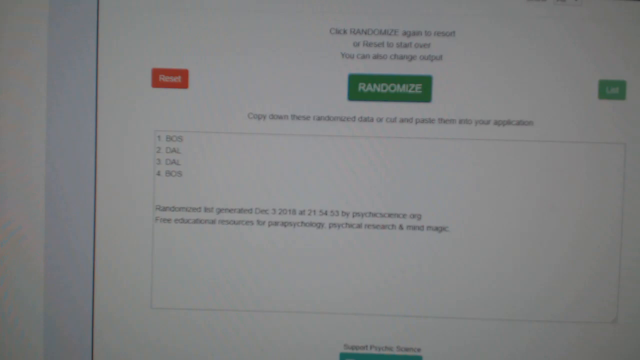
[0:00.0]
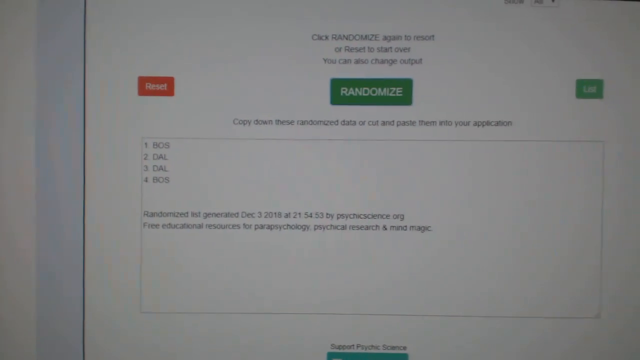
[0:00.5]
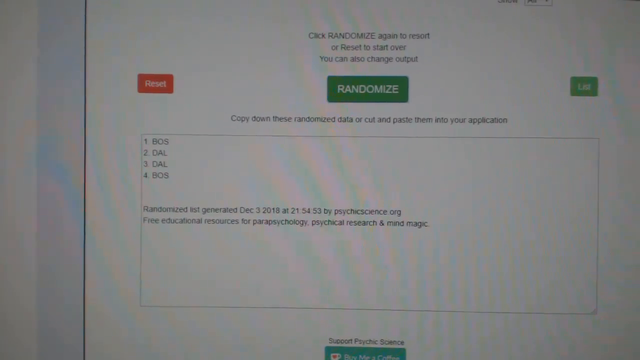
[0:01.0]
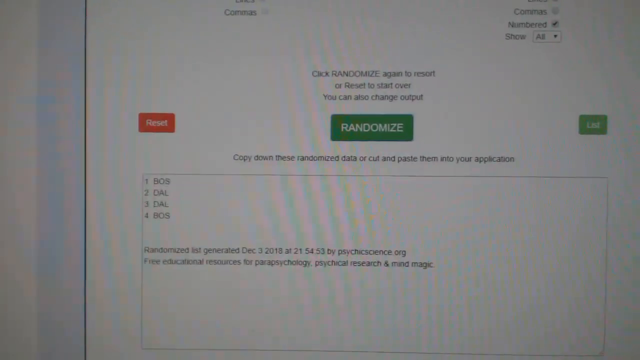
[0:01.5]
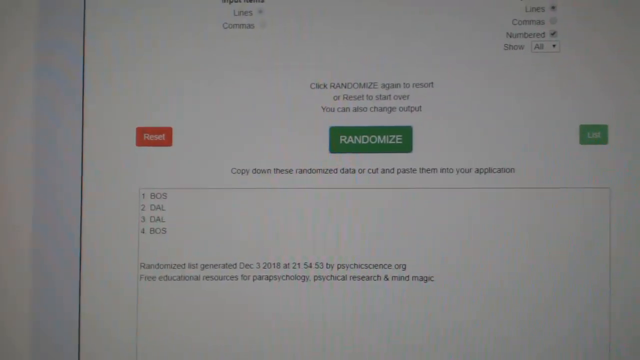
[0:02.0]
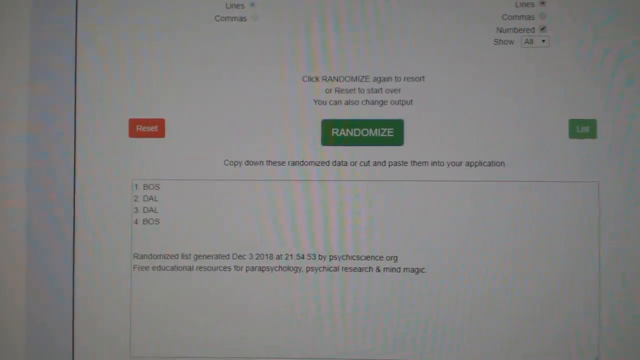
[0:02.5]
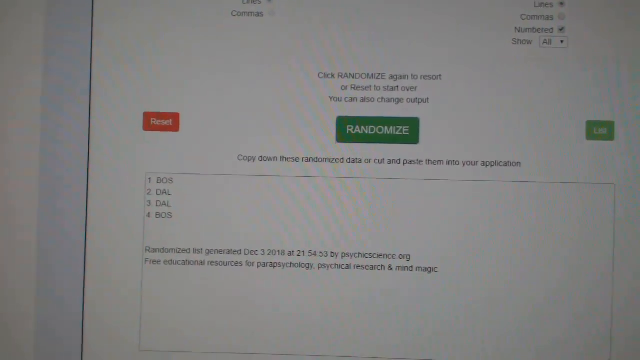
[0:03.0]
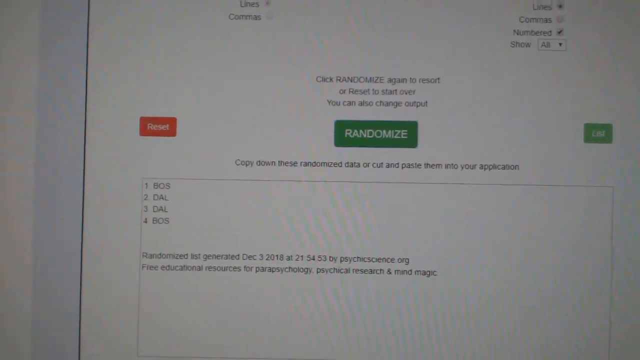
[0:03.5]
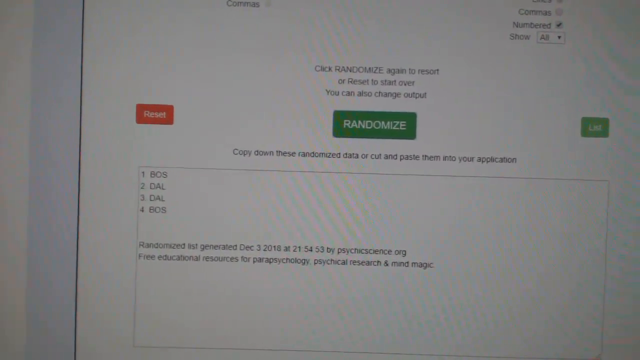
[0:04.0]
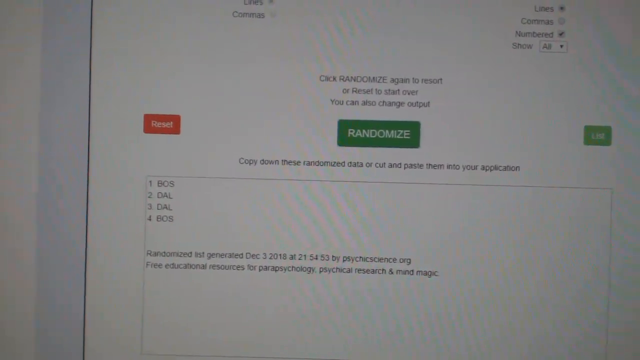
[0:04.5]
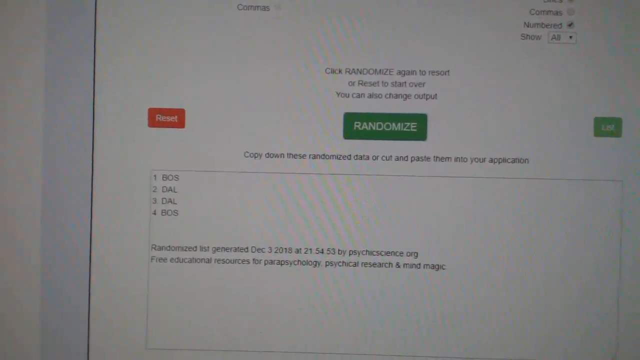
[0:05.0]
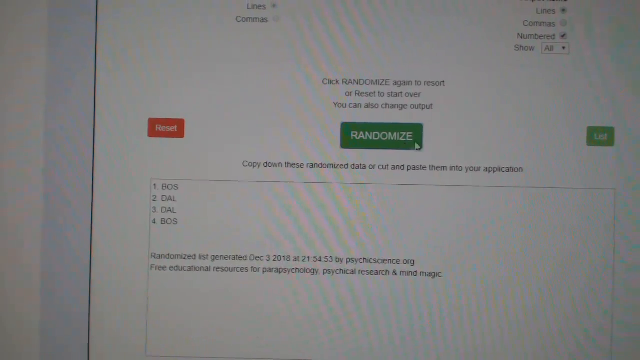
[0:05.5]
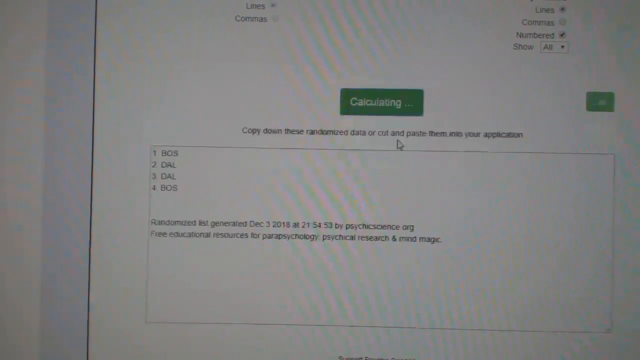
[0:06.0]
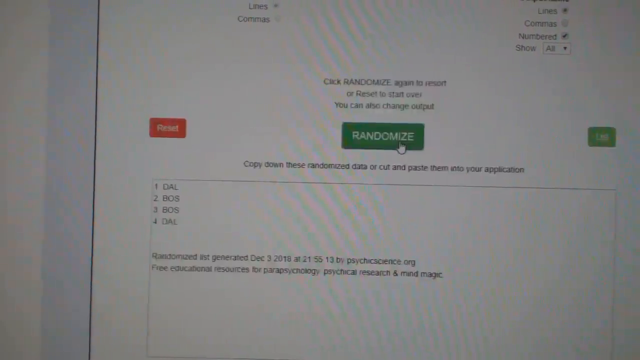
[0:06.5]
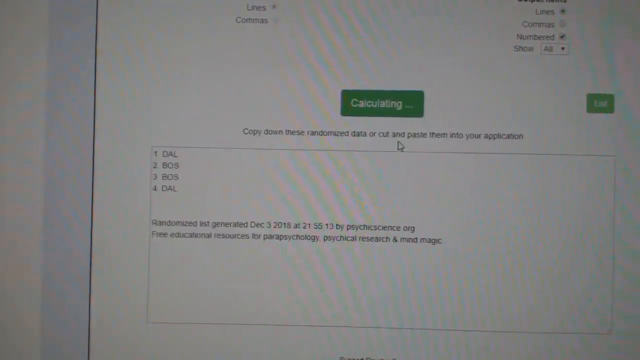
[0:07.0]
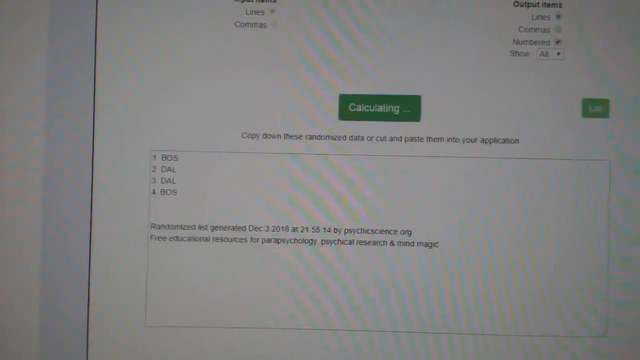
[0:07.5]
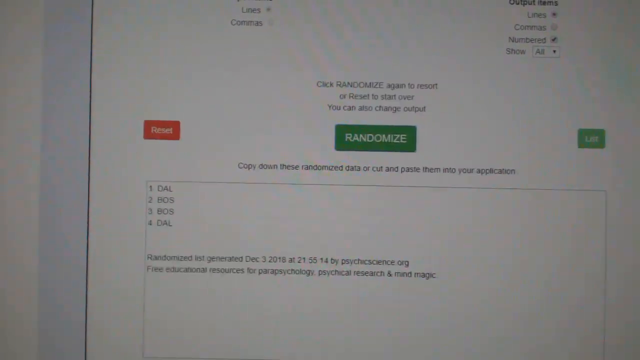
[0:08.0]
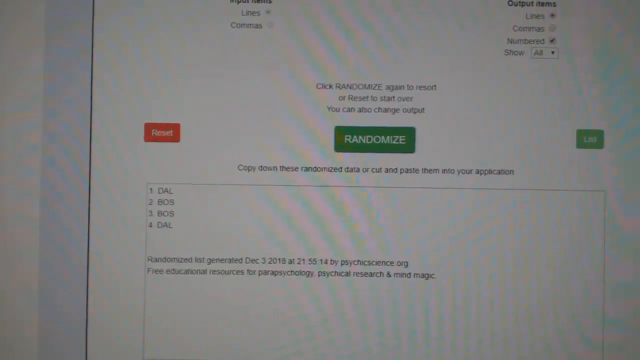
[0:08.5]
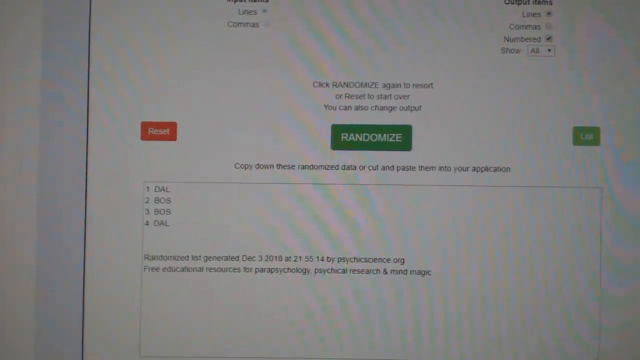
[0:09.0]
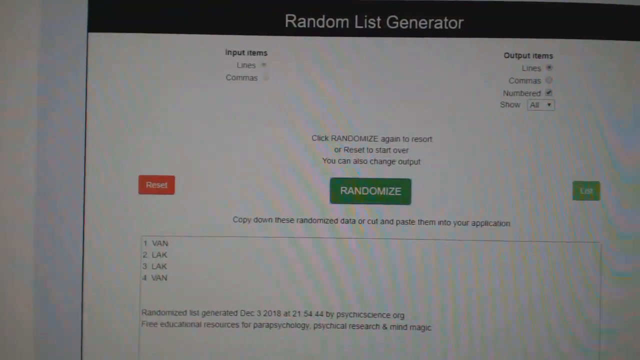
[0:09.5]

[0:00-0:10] A camera is pointed at a computer screen. In the center of the screen are three clickable buttons: the one on the left is red and says "Reset," and the one in the middle is green and says "Randomize." Below the tabs, black text reads "copy down these randomized data or cut and paste them into your application." Beneath that is a list of data reading "one, Boston, two, Dallas, three, Dallas, and four, Boston." The screen shakes as the person holding the camera moves it around. The person clicks the green "Randomize" tab, and the tab changes to "calculated."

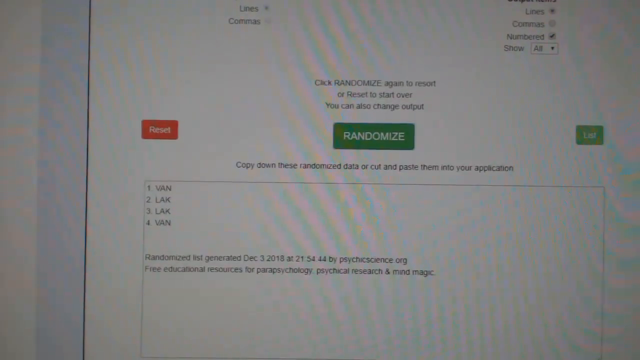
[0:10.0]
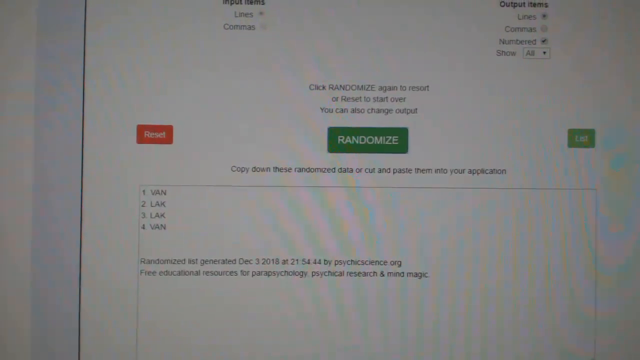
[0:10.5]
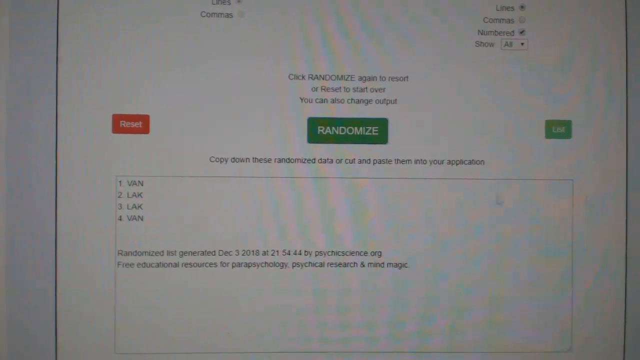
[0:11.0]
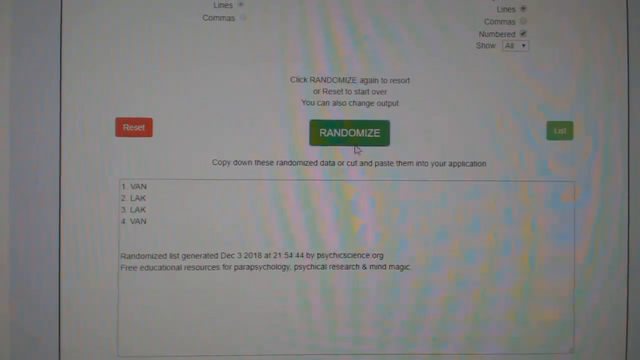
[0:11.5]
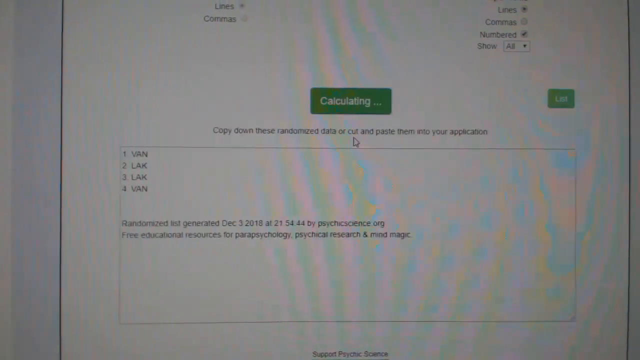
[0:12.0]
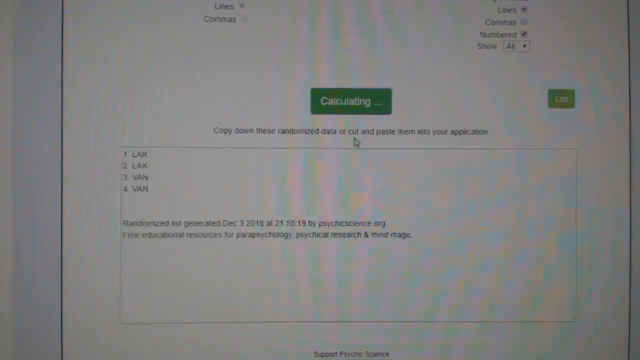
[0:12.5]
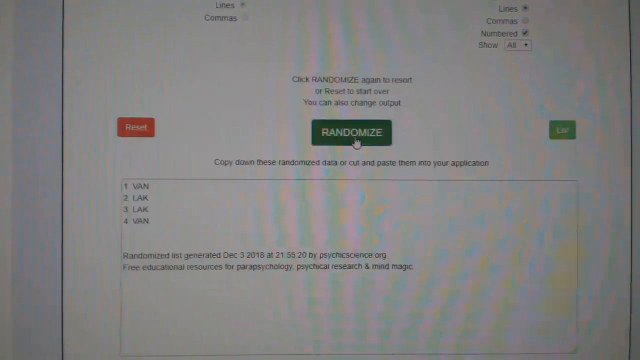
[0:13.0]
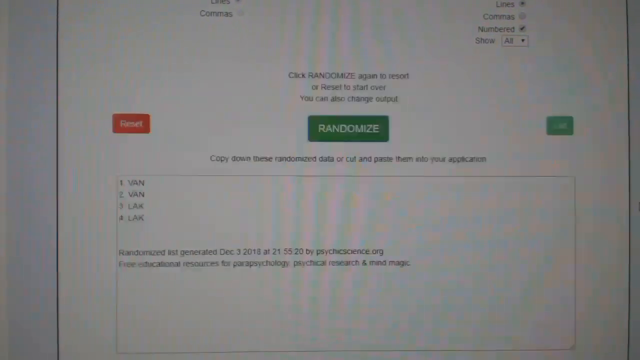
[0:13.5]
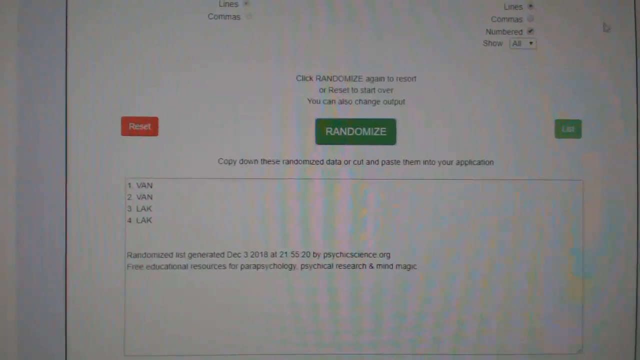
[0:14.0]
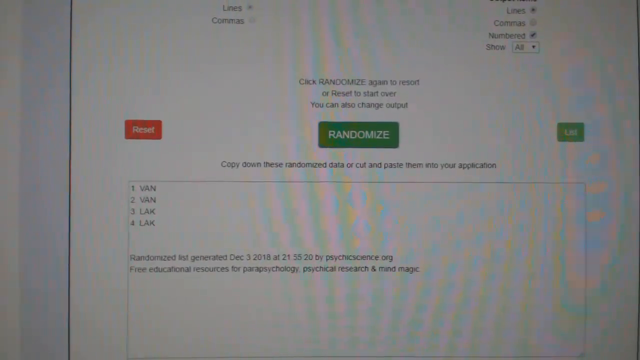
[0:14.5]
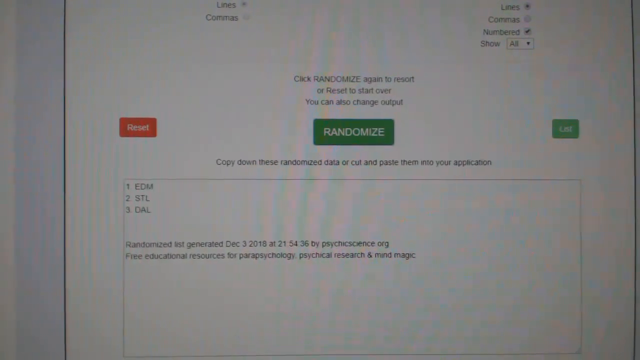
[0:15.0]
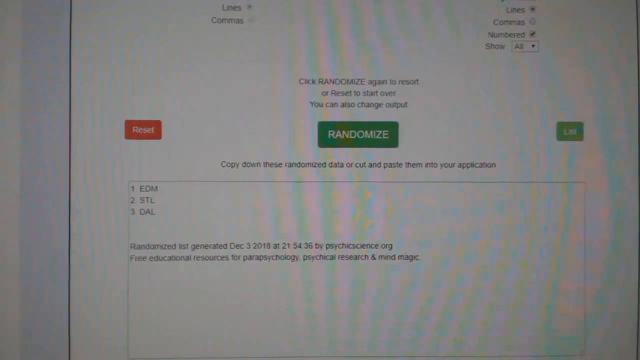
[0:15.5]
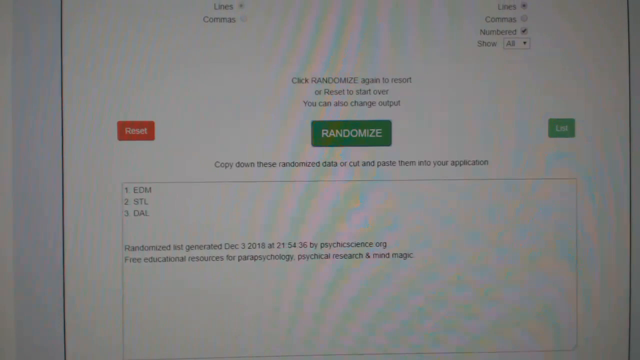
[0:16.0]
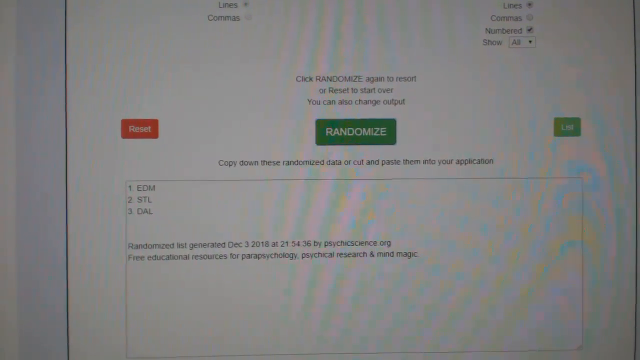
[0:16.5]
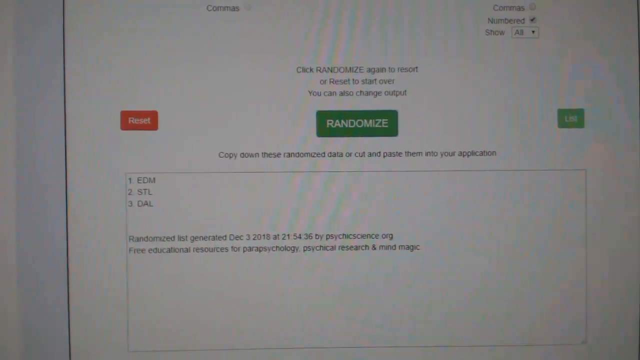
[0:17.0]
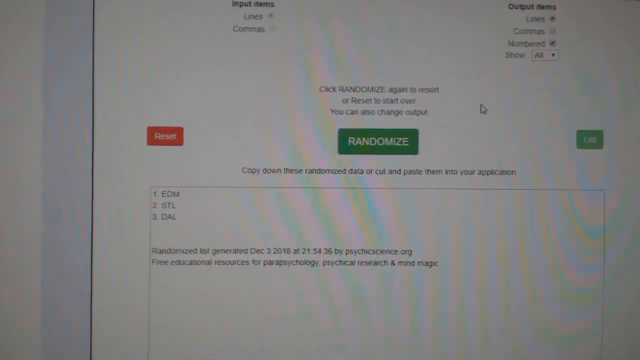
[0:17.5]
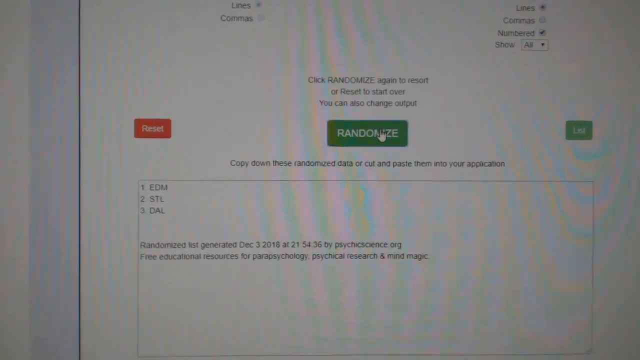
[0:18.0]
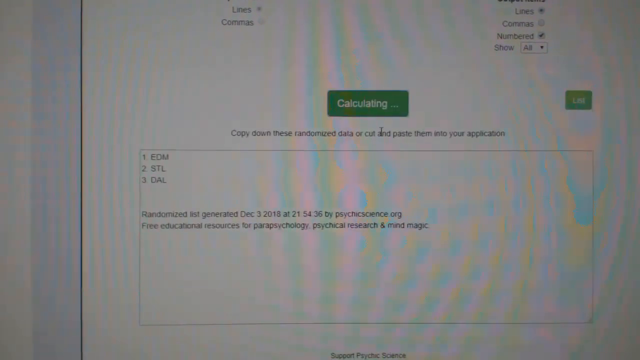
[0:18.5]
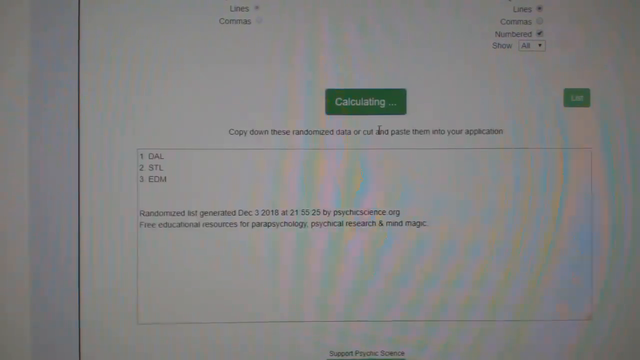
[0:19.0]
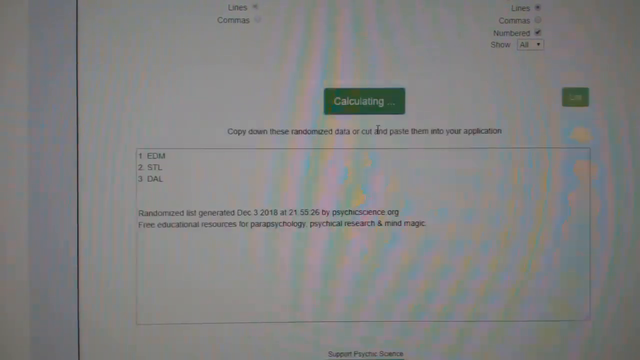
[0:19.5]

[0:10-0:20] The shaky camera faces the computer screen, where the green tab in the middle says "Randomize." The user brings the cursor over the green tab and clicks it several times, and the text in the box below changes. When the clicking pauses for a moment, the text at the bottom of the screen reads "1EDM, 2STL, and 3DAL." The user clicks the Randomize tab again, which changes it to "calculating," and clicks it a couple more times. Once it stops, the text reads "1 EDM, 2 STL, 3 DAL."